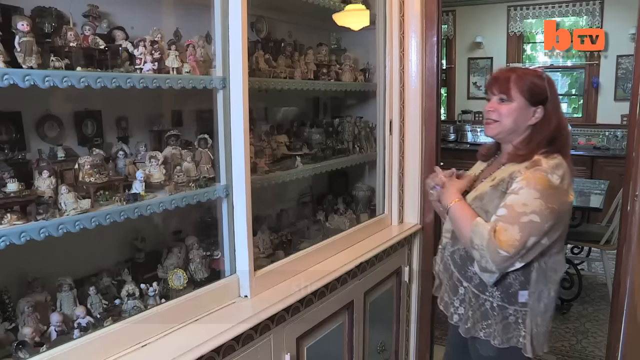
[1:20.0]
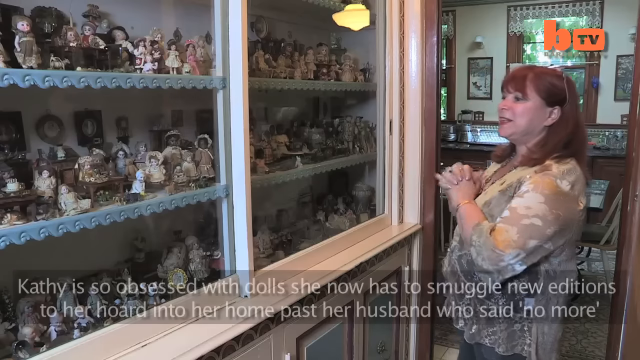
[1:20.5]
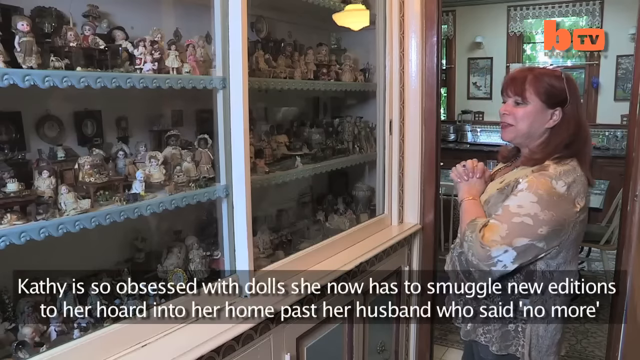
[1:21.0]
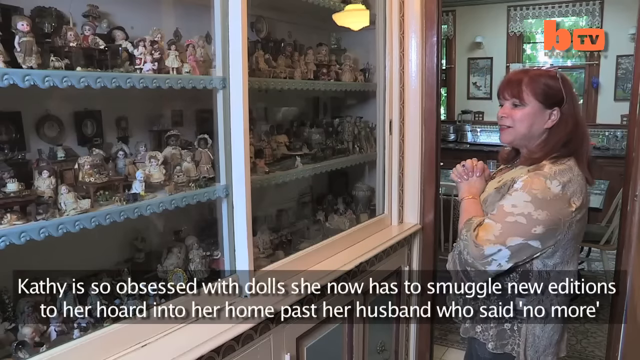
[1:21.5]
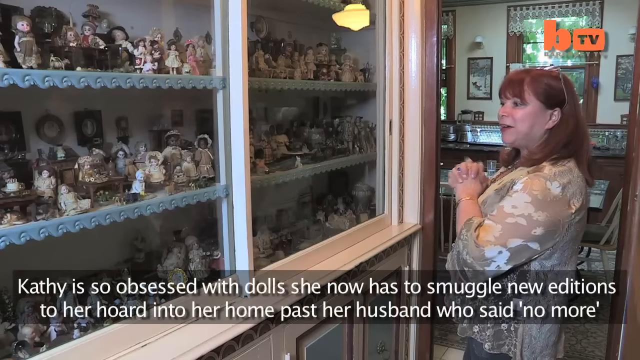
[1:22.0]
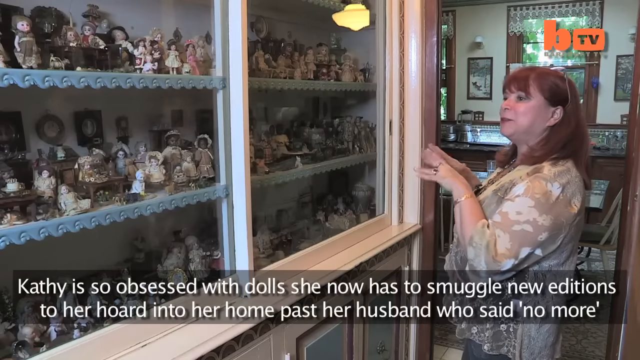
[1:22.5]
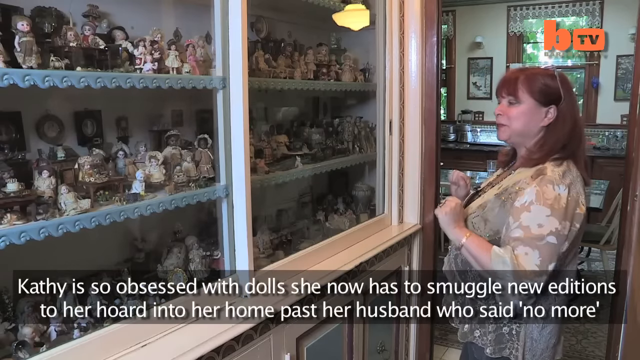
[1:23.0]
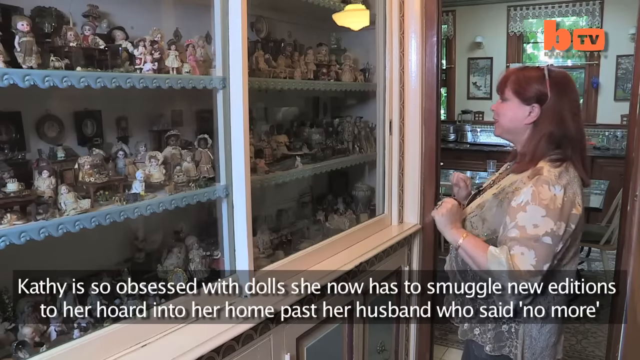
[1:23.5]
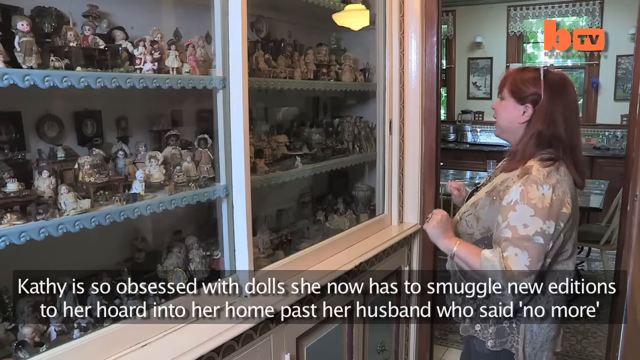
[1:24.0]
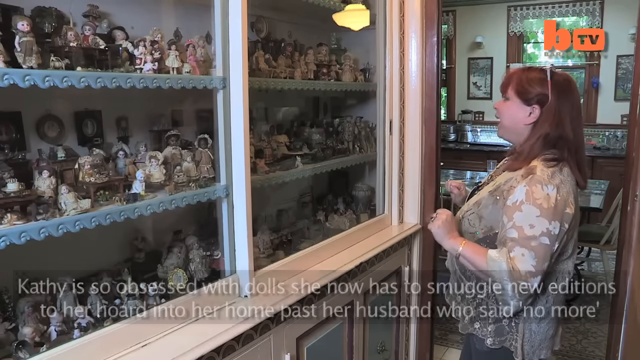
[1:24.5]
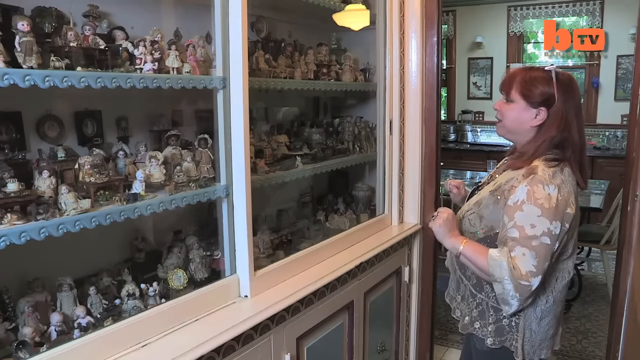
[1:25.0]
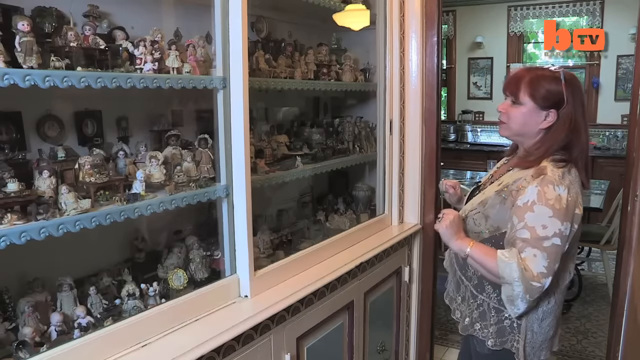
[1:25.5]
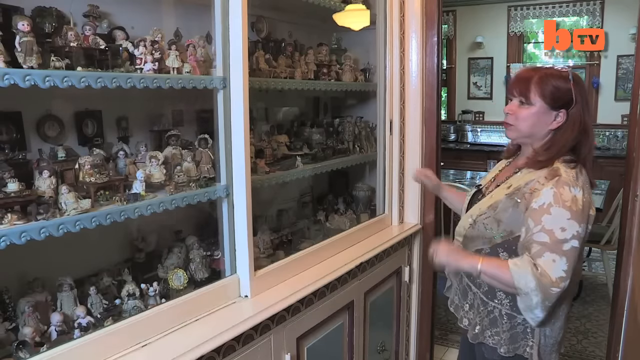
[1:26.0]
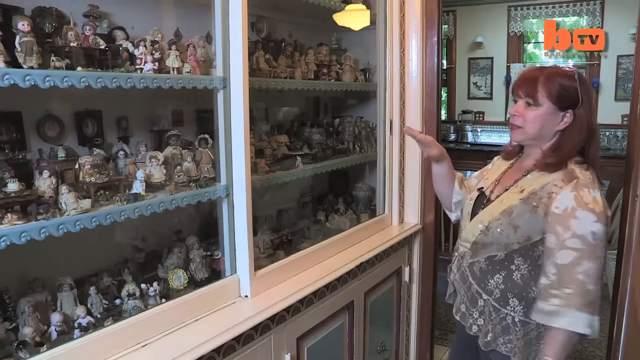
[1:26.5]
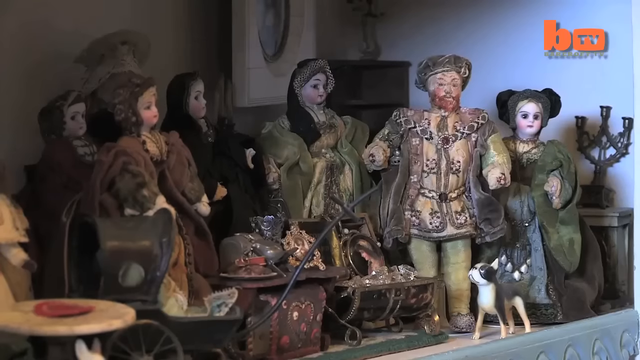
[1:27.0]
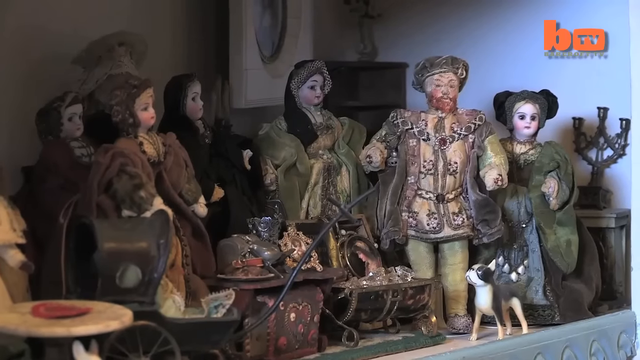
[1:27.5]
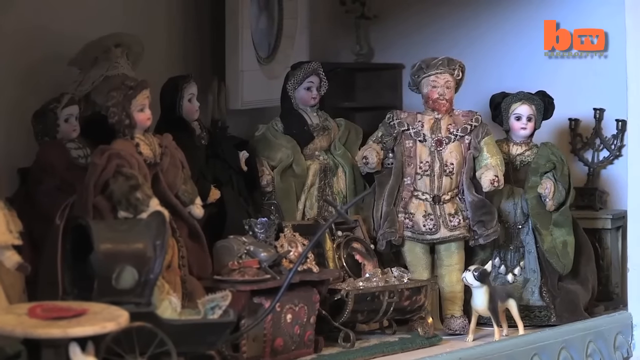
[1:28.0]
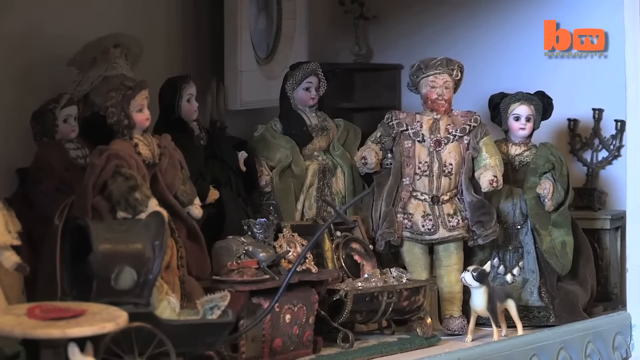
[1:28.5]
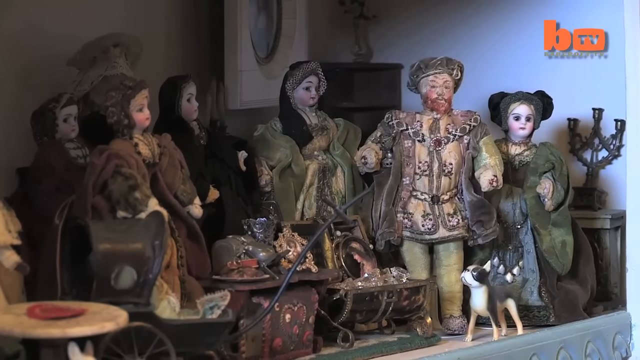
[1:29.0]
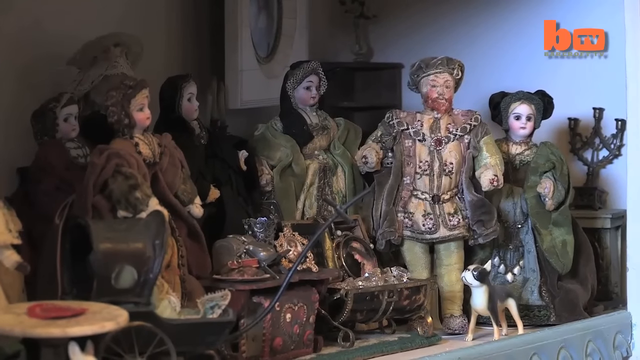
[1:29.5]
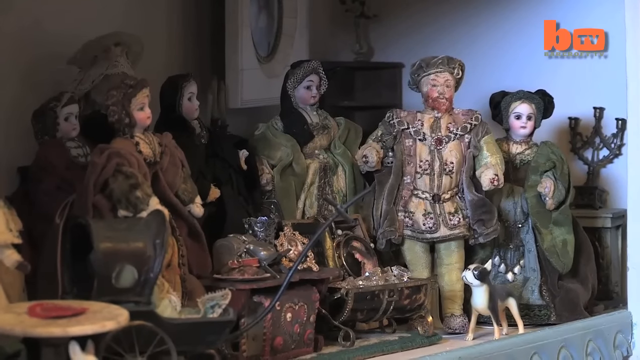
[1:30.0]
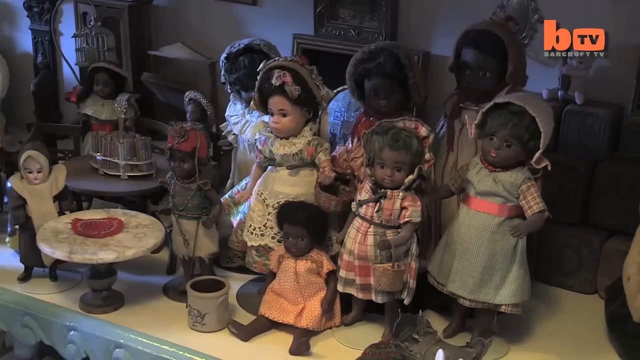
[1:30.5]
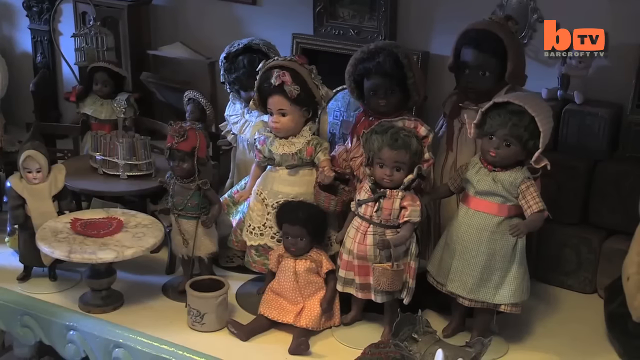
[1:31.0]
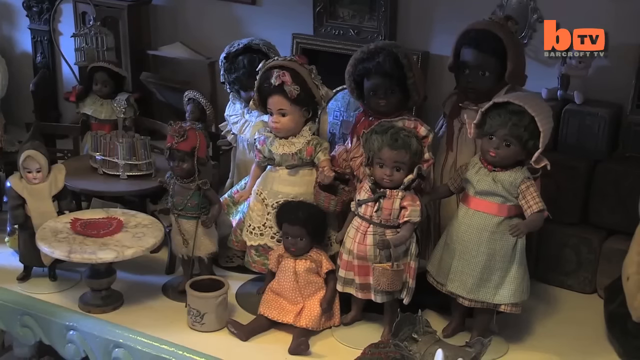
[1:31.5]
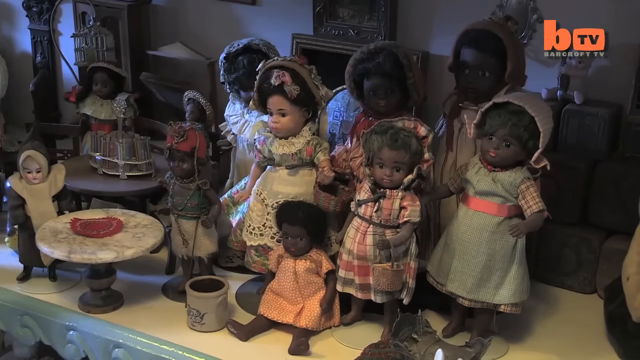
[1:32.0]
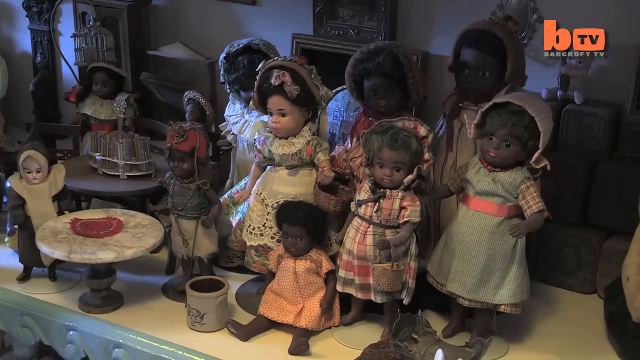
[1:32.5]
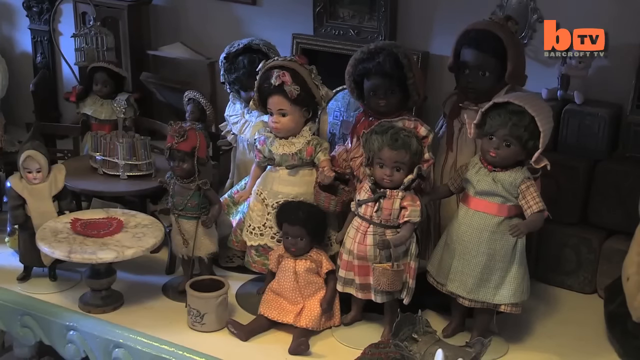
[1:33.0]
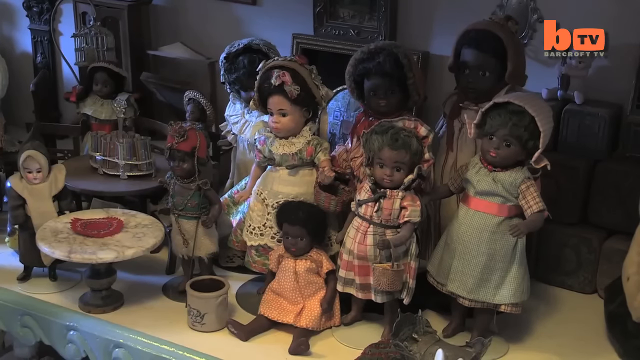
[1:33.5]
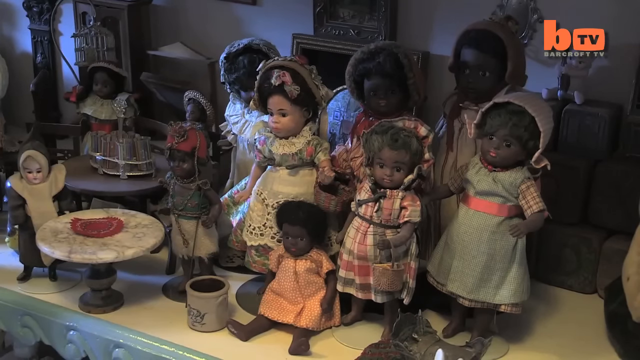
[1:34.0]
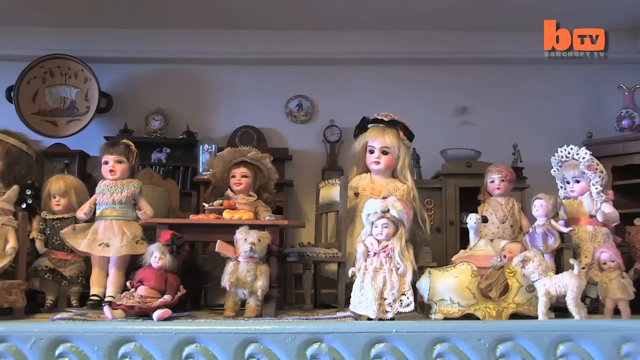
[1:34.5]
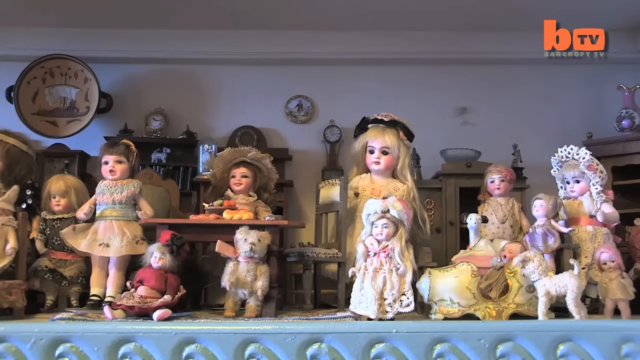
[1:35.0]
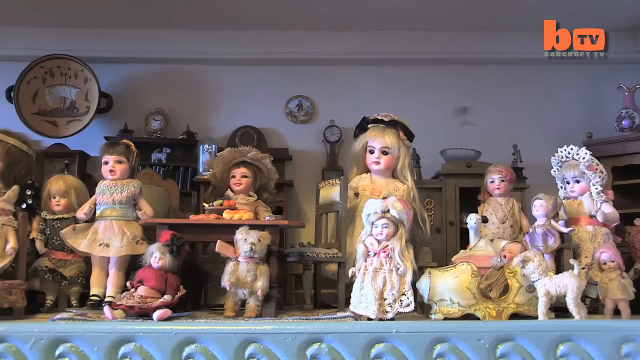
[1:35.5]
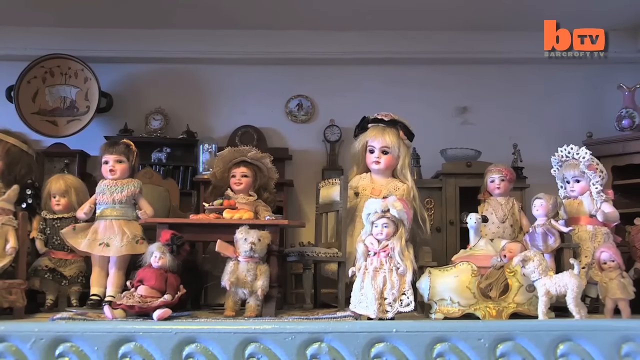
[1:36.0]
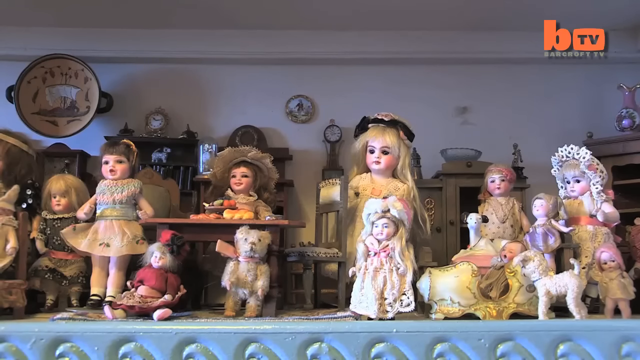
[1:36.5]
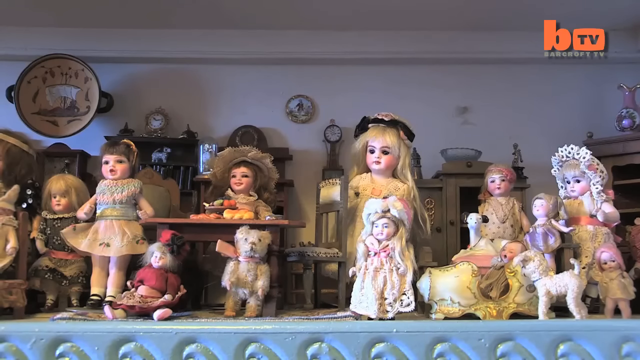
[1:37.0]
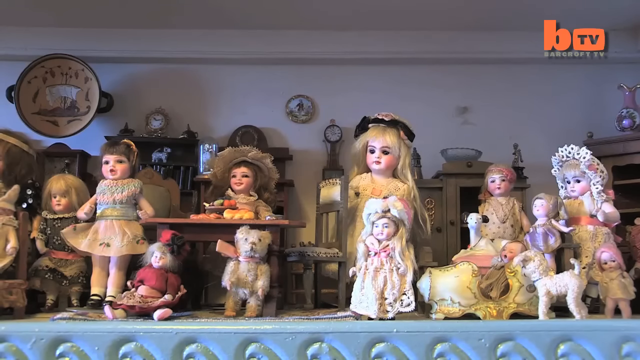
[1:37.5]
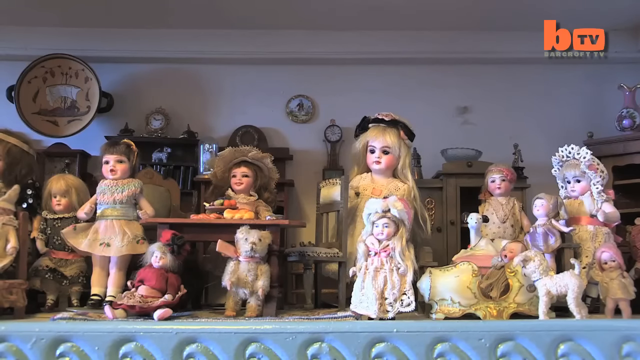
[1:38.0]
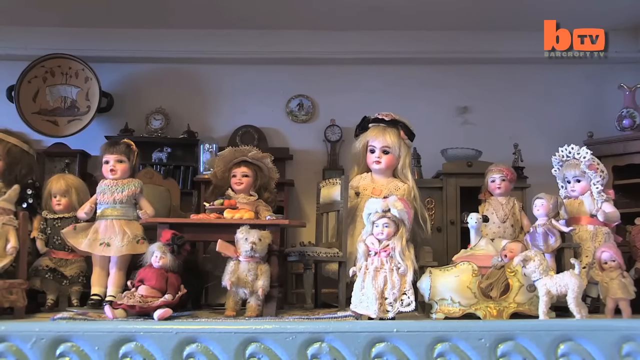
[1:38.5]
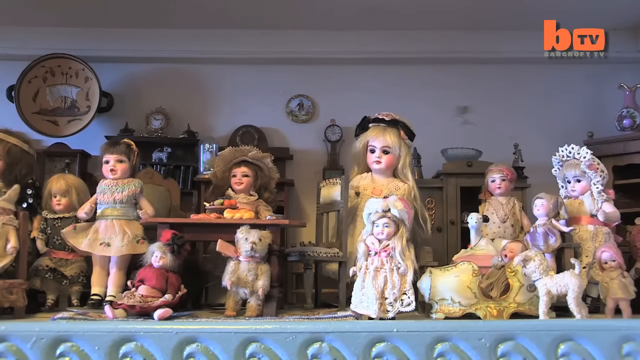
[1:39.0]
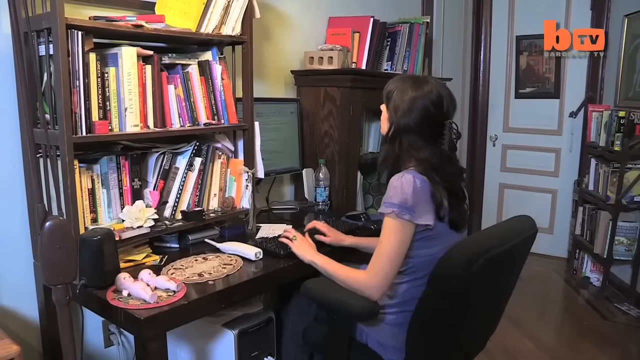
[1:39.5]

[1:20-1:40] The woman is still by the large cabinet display of dolls, shown from a side view and clearly talking. Text below reads: Kathy is so obsessed with dolls she now has to smuggle new additions to her hoard into her home past her husband who said "no more". Most of the scene stays on this shot before quickly cutting to several much closer, zoomed-in shots of the dolls. The first shows 6 dolls, apparently 5 female and 1 male, all seemingly wearing dark green clothing. The next shows 11 dolls, apparently mostly children; most of them have darker skin, and they are resting on a shelf, with what look like some dark gray cubes on the right-hand side of the shot. The third shot shows 11 more dolls: one is a teddy bear, one resembles a small dog, and the other 9 look to be children. At the end, a woman in a purple shirt sits on a black office chair, typing on a black keyboard, with a lot of books on a bookshelf to her left and a white door to her right.